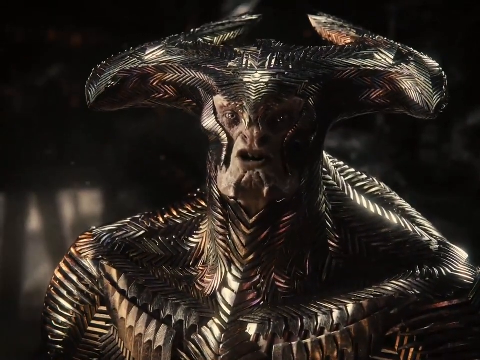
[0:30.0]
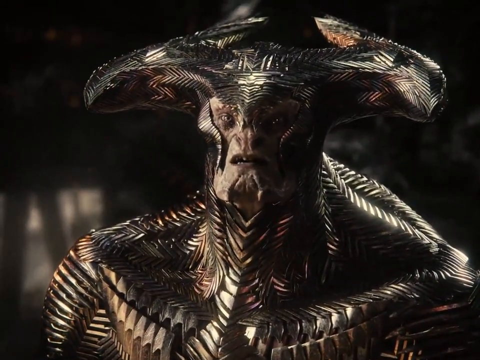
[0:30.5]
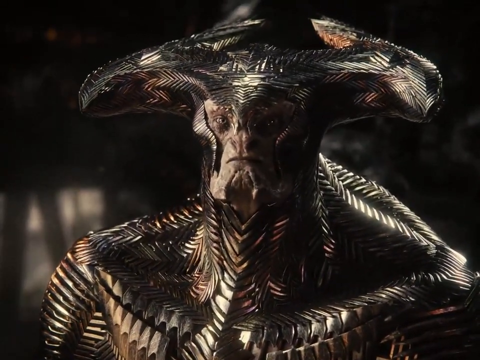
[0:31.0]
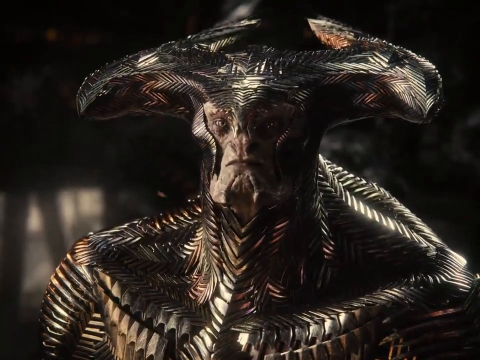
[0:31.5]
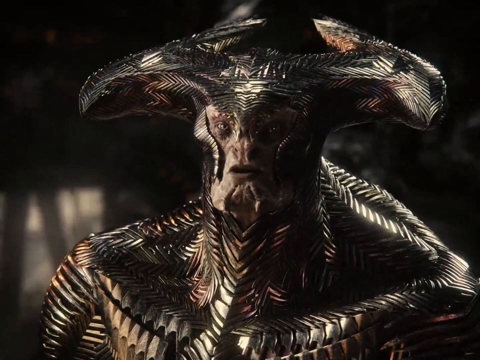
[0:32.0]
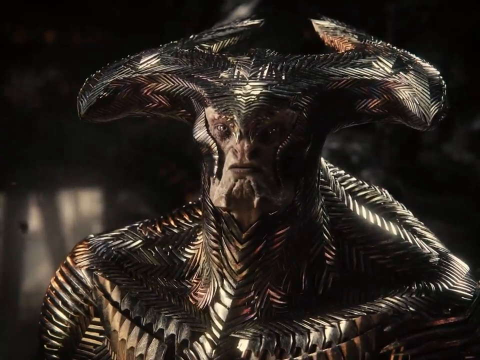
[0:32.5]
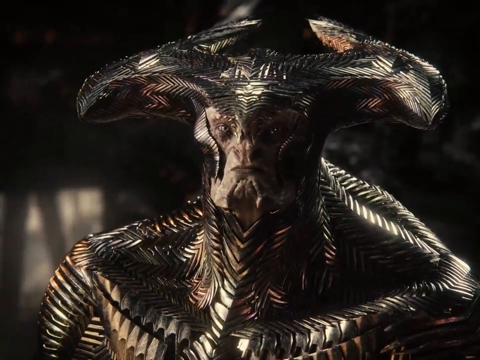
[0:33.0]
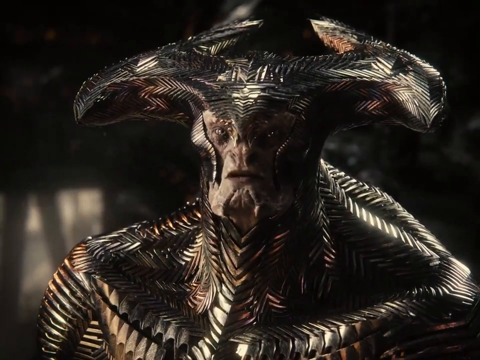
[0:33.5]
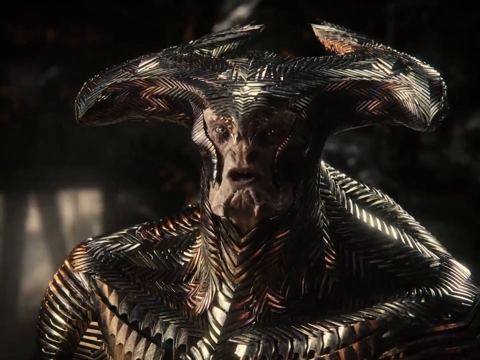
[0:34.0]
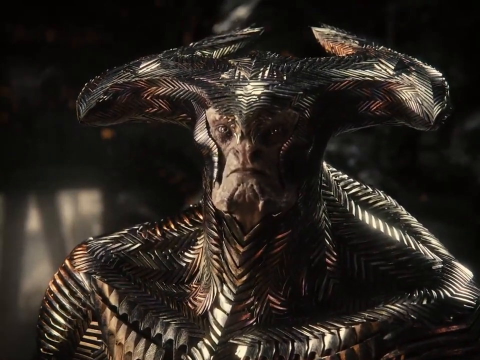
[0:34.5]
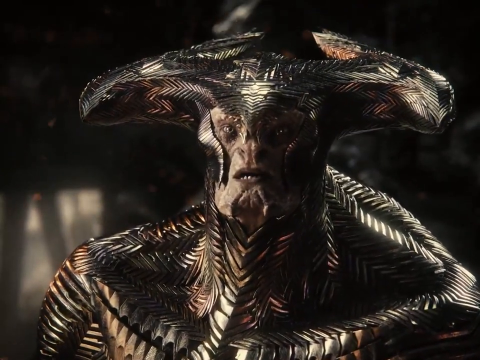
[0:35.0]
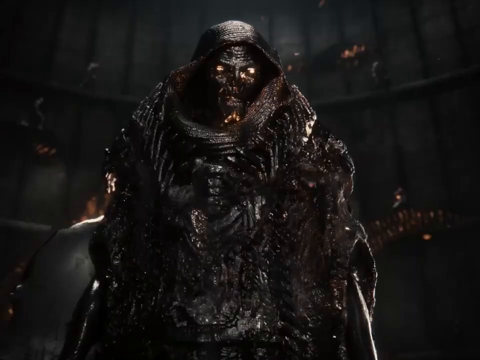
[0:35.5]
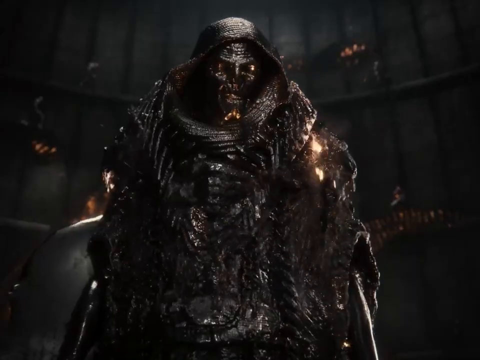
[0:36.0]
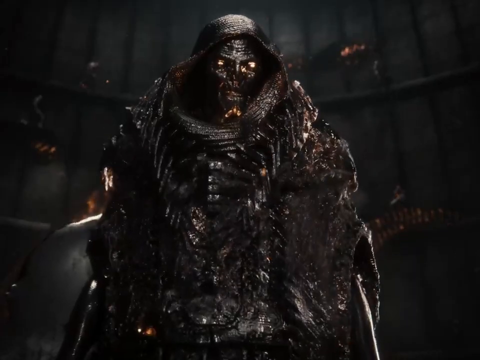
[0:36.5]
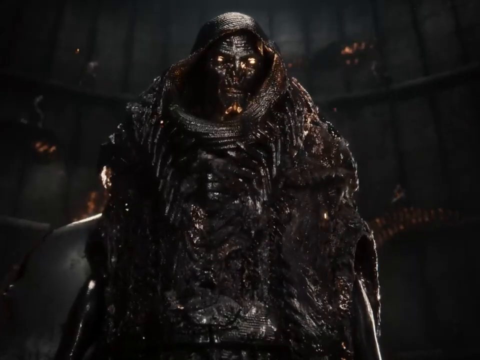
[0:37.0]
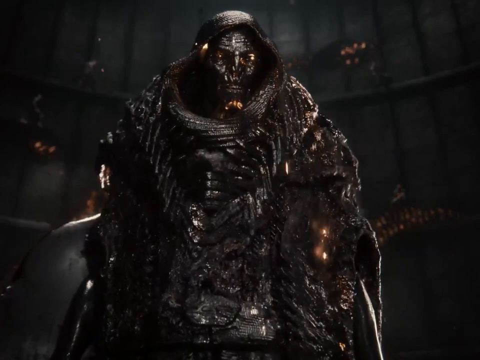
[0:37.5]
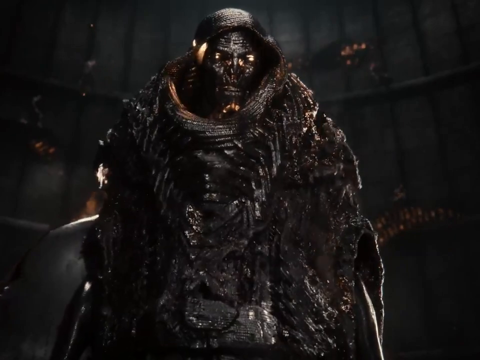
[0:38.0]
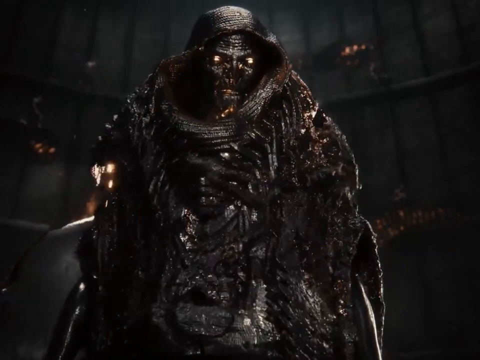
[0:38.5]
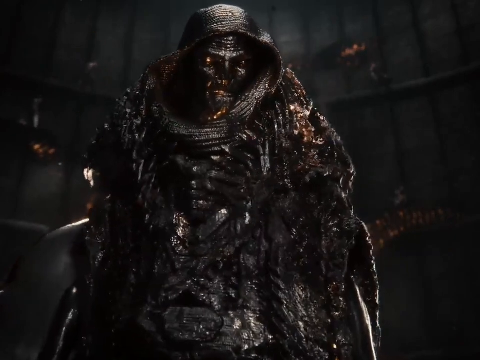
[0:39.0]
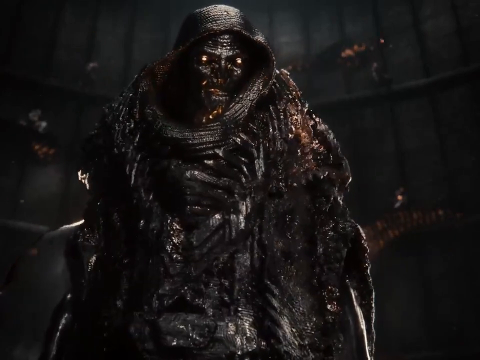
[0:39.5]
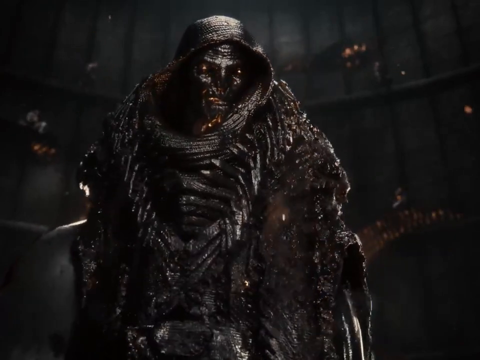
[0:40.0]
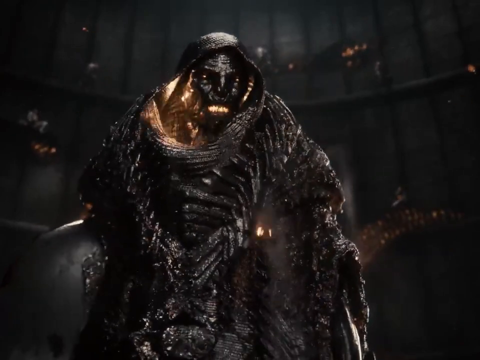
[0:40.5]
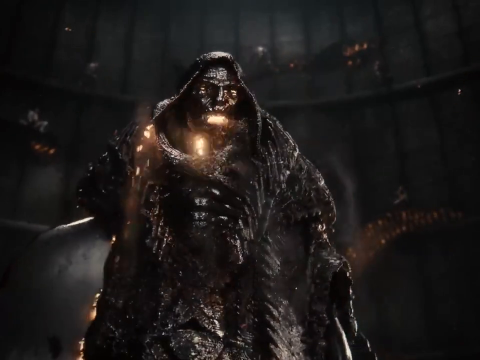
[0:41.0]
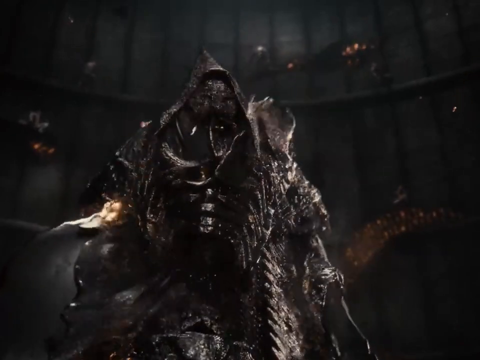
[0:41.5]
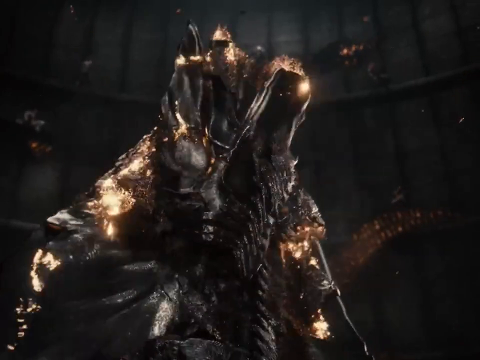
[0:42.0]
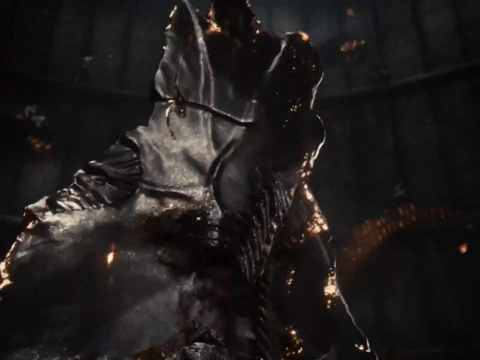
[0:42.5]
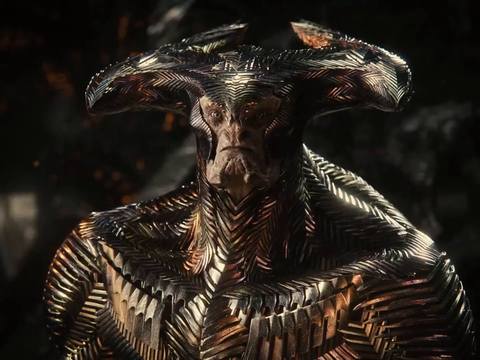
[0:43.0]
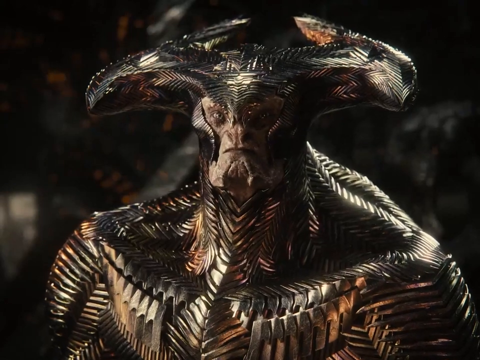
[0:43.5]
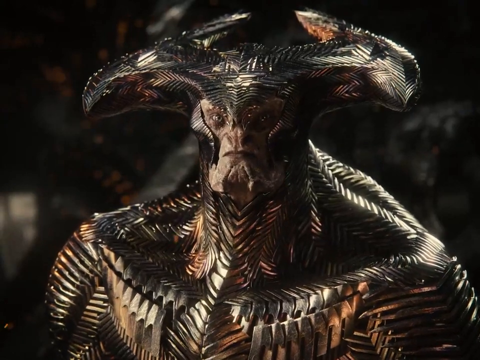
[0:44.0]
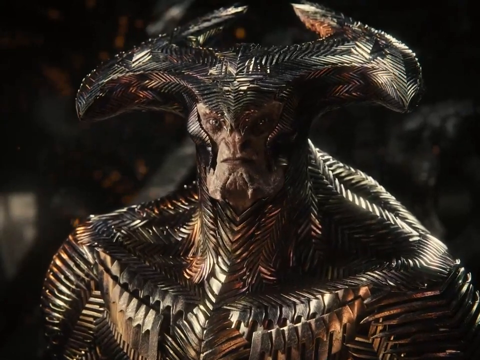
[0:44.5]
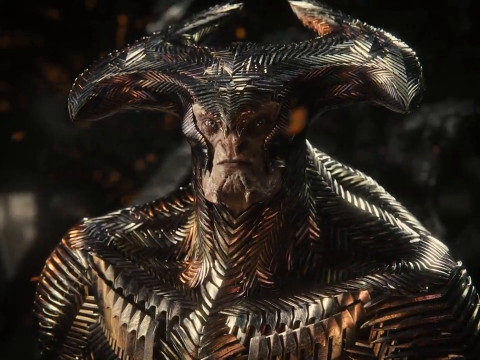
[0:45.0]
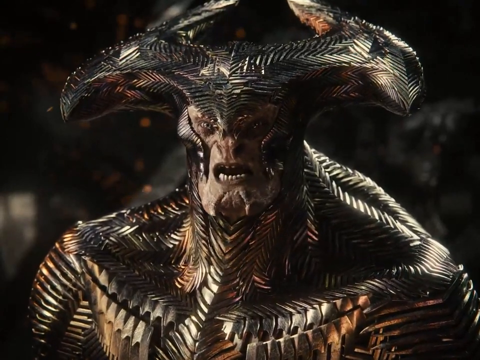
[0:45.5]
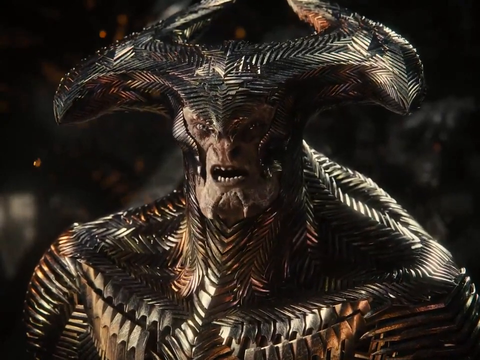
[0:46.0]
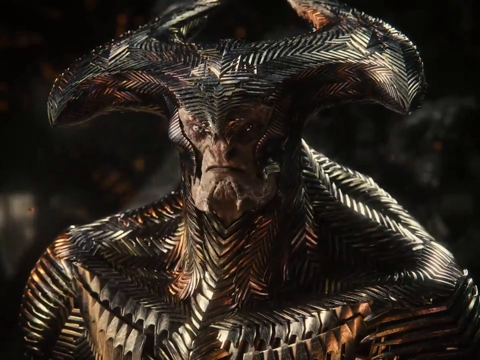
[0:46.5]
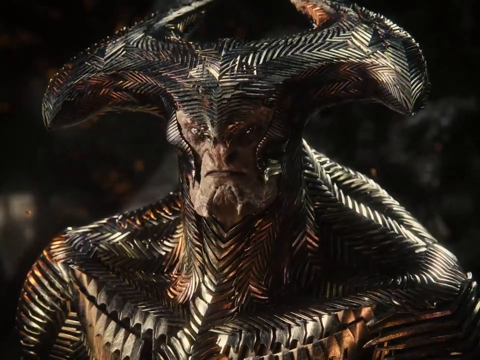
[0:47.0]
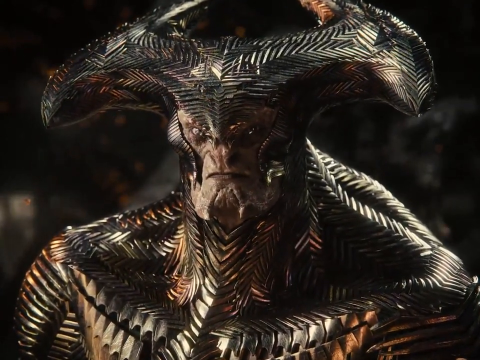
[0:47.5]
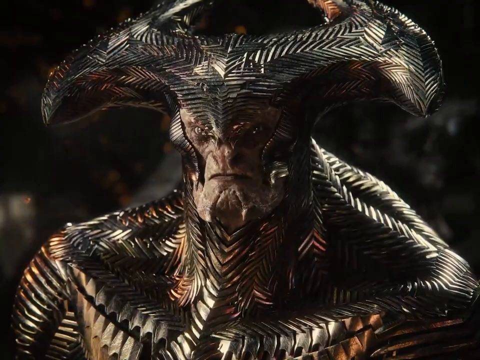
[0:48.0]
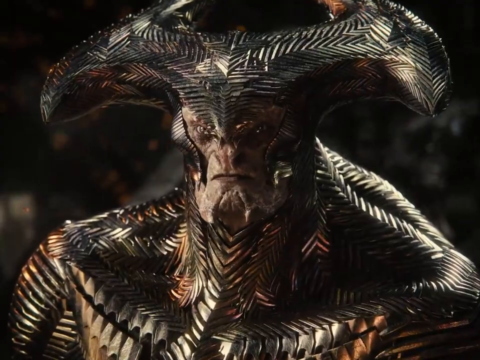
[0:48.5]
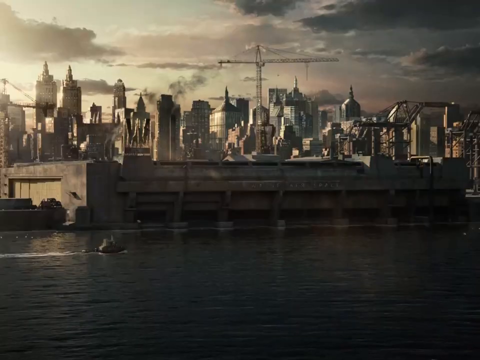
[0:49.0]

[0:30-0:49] Two villains continue to be shown. One villain looks almost demon-like, with horns bent backwards toward the back of his head and centered. The other villain has a headdress, a mask, and armor with gold scales all over it. The villain is muscular, and the face is beady, old-looking and scaly; the villain looks 100 years old. He is talking to another villain, who seems to be higher-ranking. This villain has fire inside and a cloak of black, reptilian, animal-like skin, and the face looks really old. The second villain, which looks like some sort of demon or some sort of Grim Reaper with a really heavy cloak on, is transforming into something even more sinister: a dark knight kind of figure.